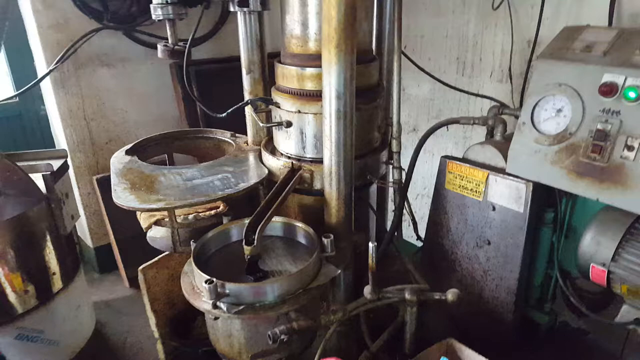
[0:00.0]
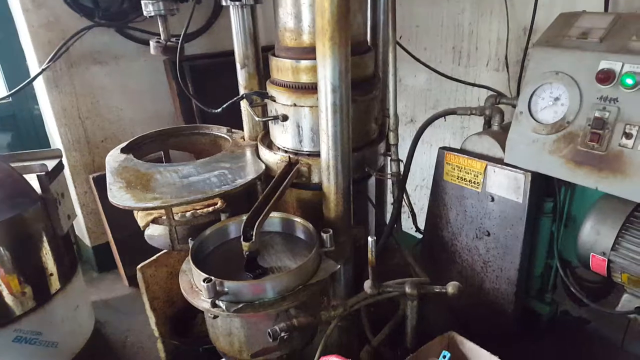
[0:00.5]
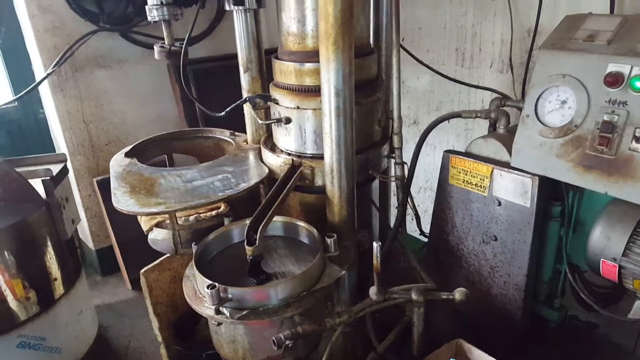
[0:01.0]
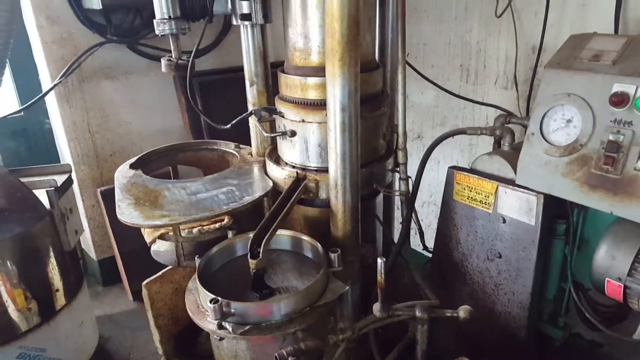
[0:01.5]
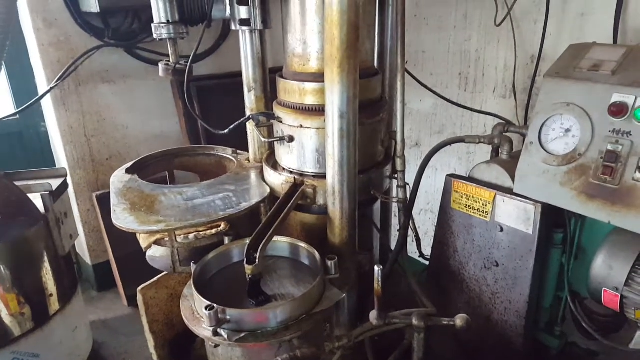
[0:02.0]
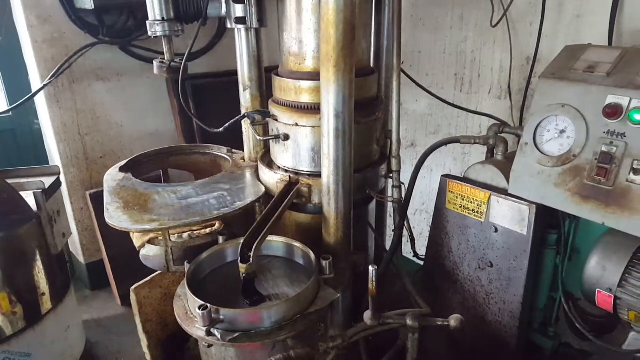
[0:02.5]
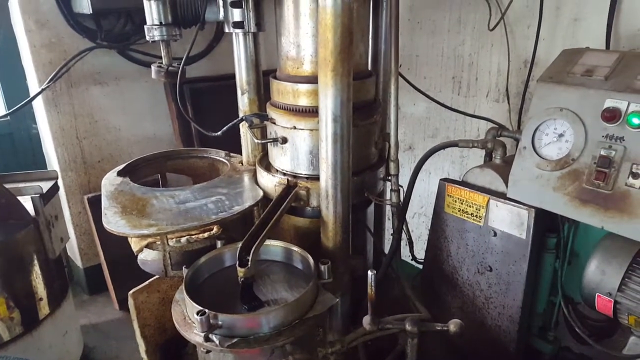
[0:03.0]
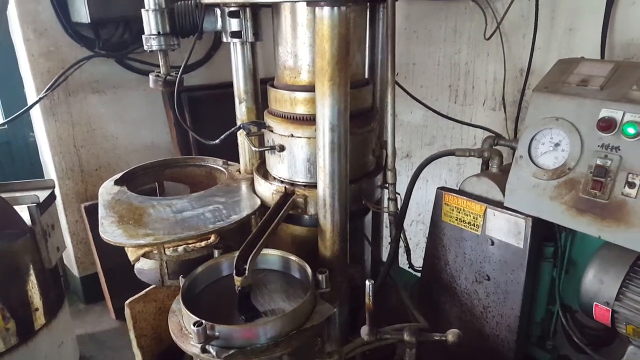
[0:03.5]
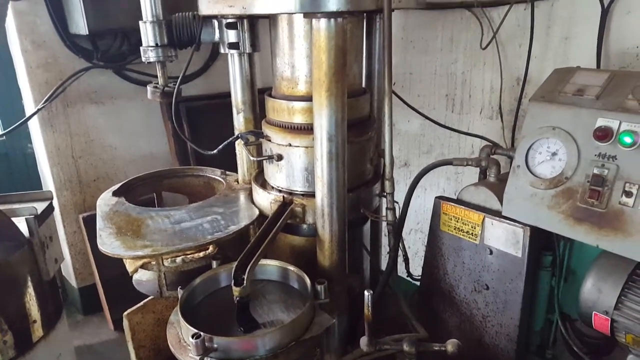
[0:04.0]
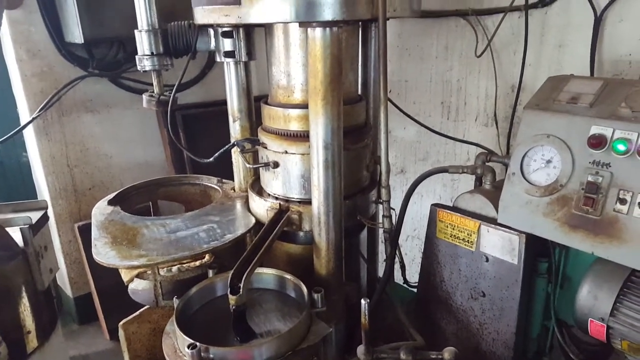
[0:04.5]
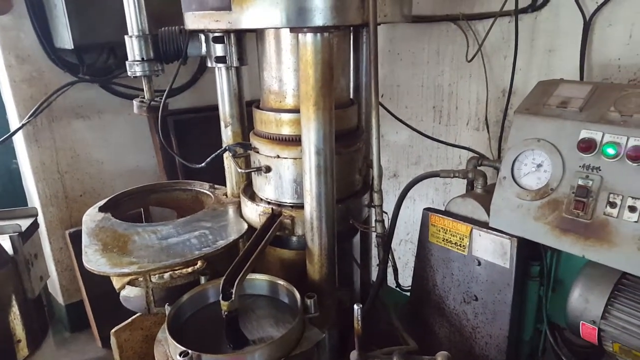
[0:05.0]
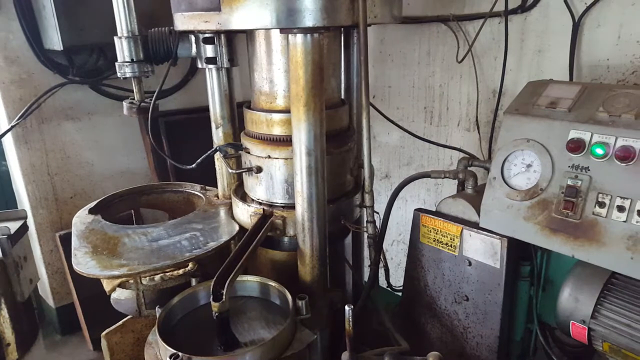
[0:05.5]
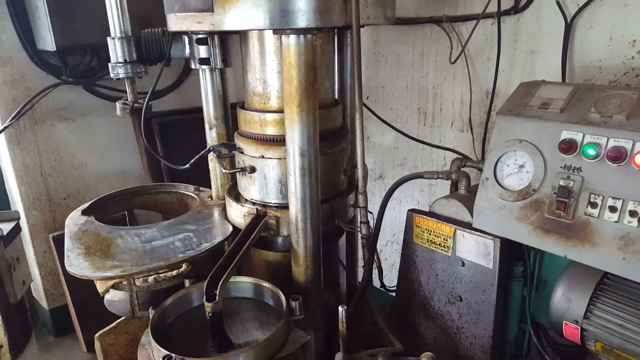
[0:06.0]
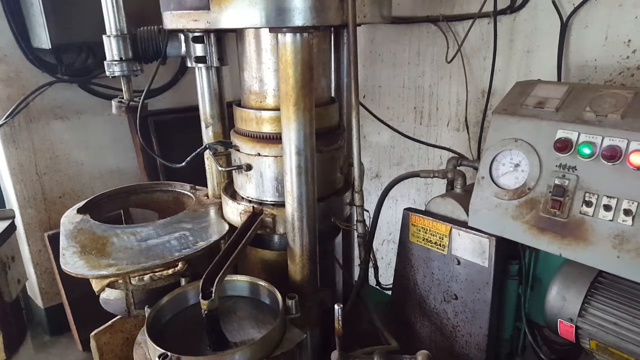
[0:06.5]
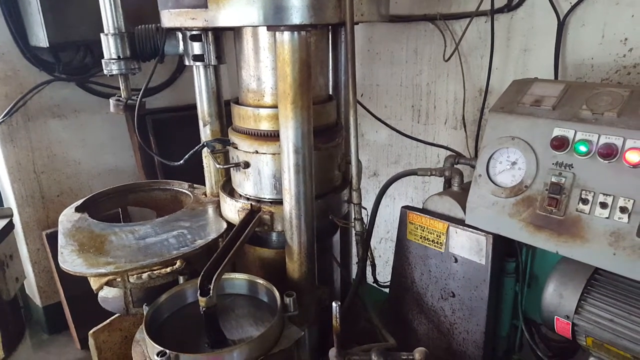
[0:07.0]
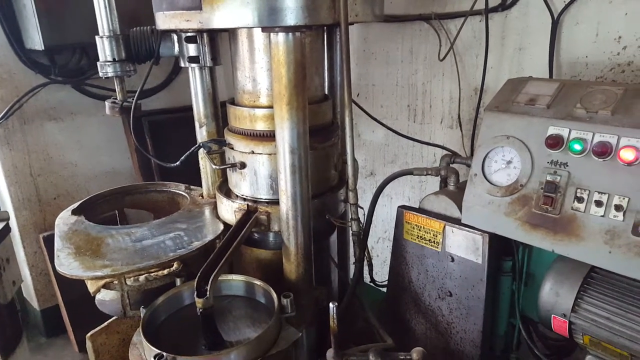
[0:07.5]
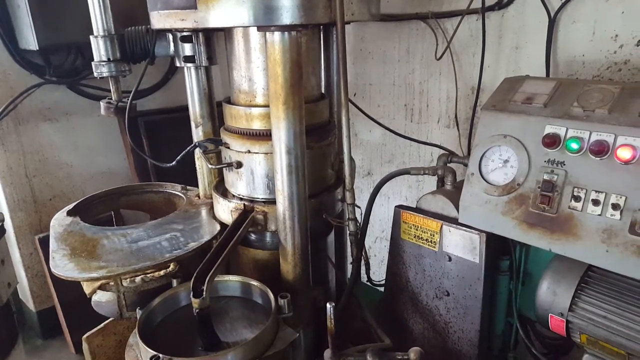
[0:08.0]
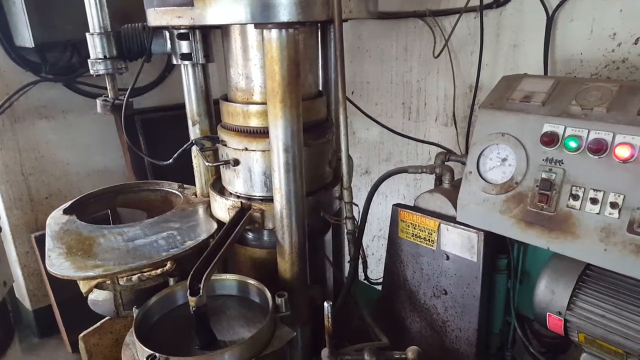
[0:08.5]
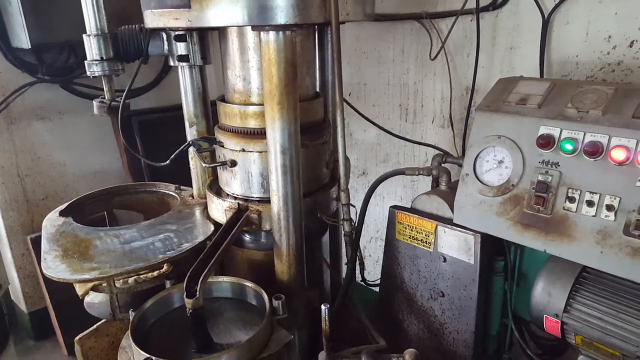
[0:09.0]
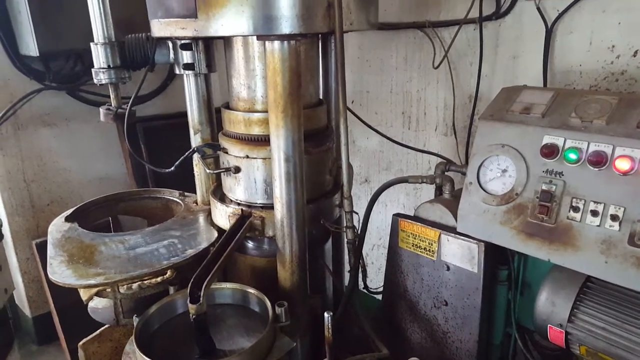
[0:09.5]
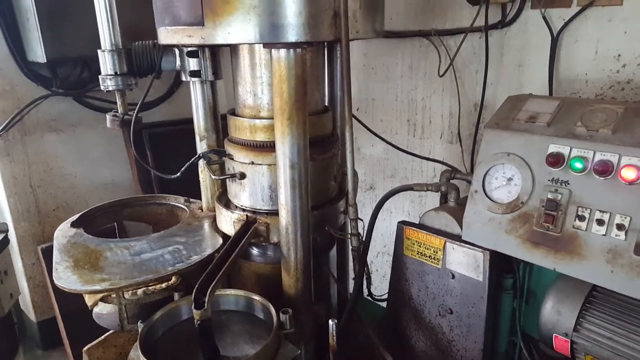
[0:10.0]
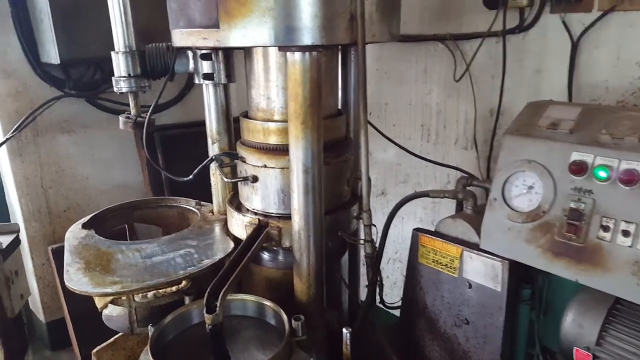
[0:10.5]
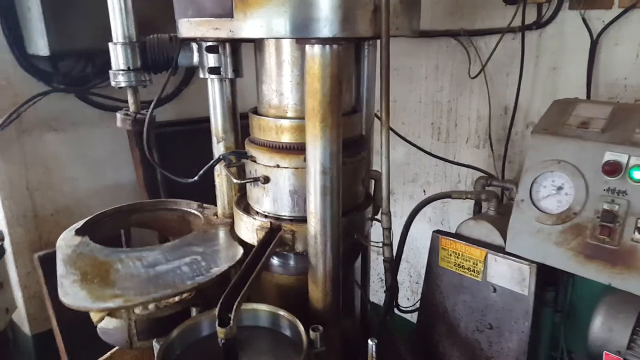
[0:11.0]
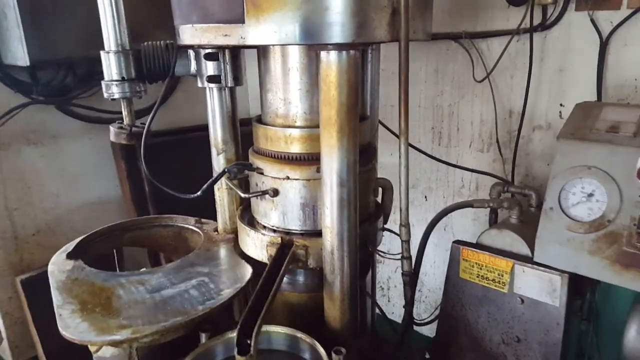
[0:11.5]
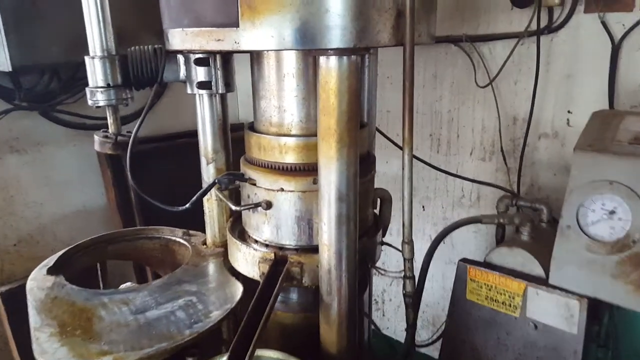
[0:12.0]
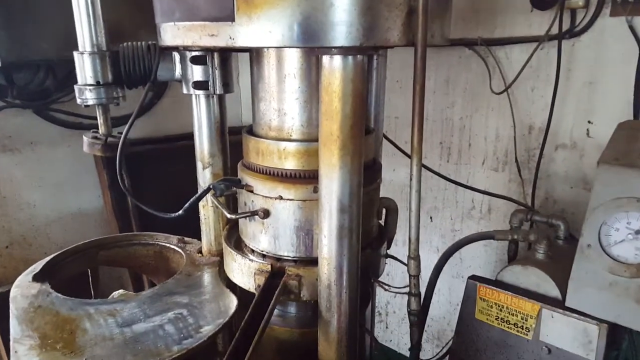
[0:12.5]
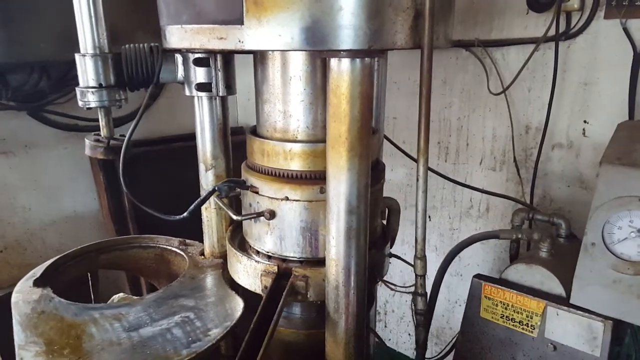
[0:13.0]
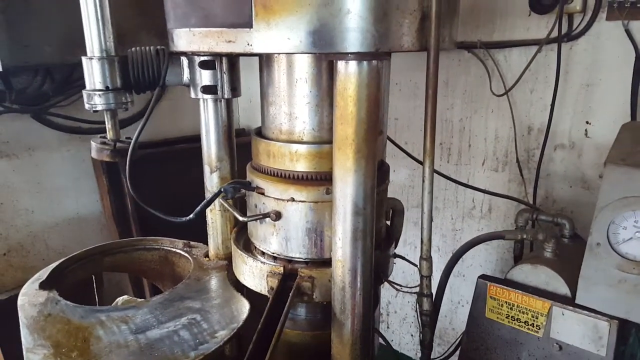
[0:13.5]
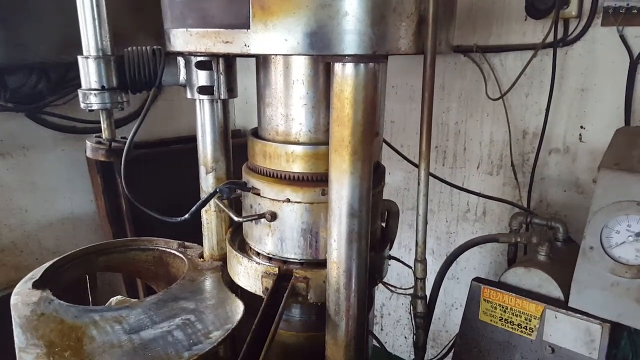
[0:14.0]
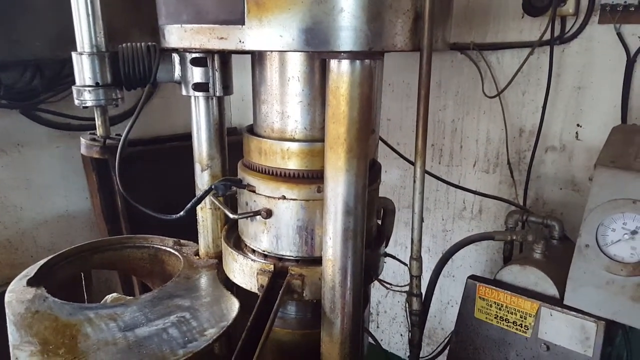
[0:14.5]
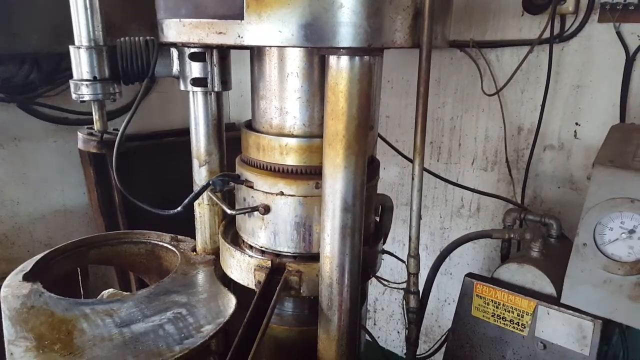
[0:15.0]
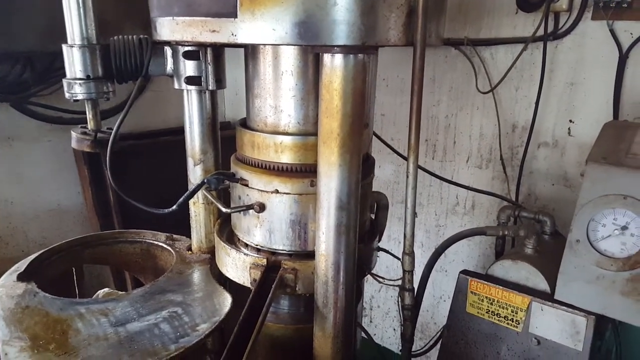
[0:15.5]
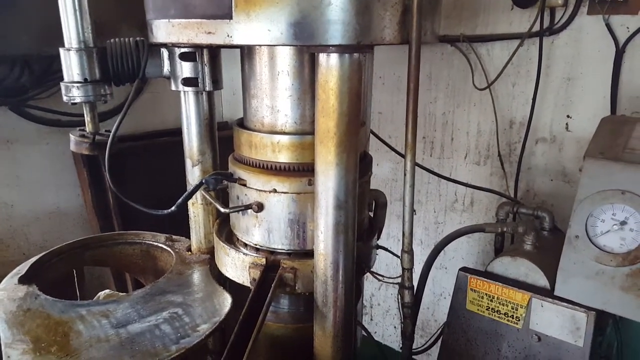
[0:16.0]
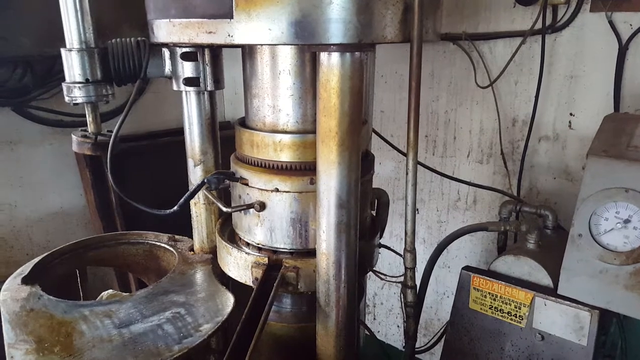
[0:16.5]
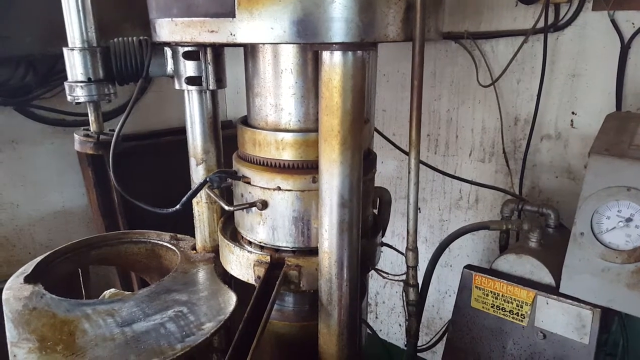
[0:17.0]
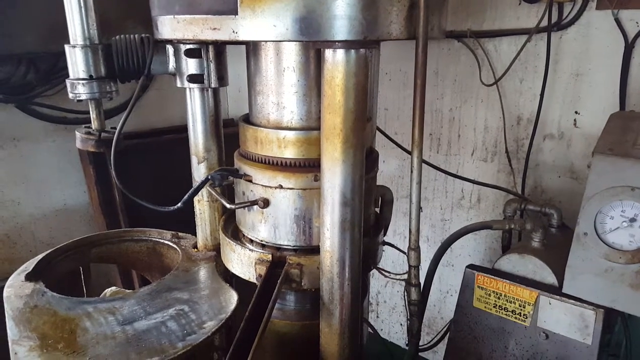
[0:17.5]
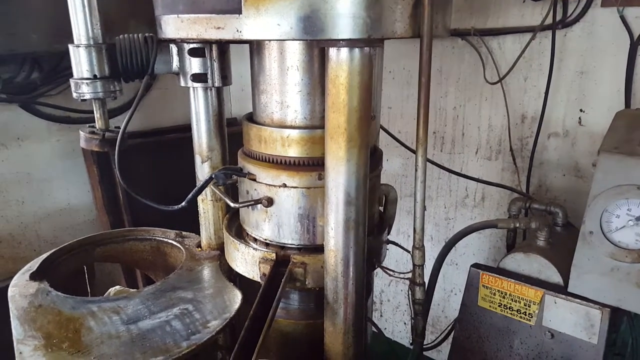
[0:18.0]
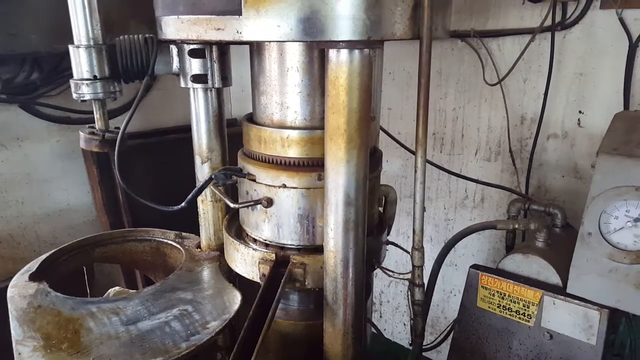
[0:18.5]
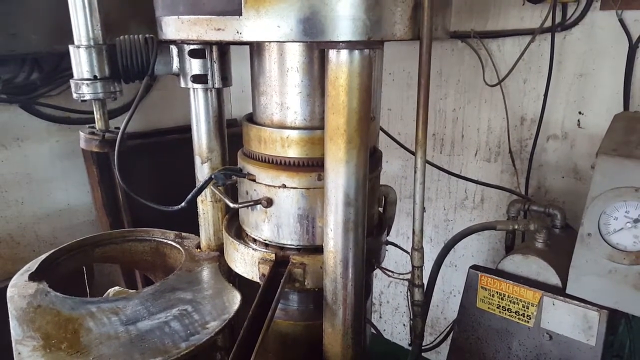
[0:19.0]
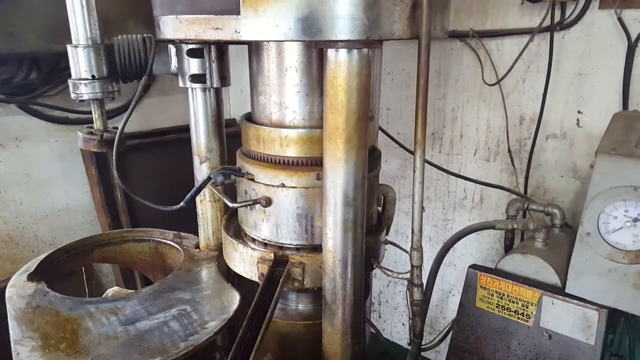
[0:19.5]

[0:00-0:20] Industrial machinery appears, with what appears to be a piston in the center. The machinery appears to be made of metal, likely steel or iron; it is a somewhat gray silver color but heavily weathered, with a lot of what appear to be burn marks or rust and a lot of yellowing. The piston in the center appears to be very slowly rising as the camera slowly zooms in on it. Off to the right side there is a panel with a dial and multiple lights, and on the right side there is some sort of receptacle with a similar steel frame. The camera pans over to the left and begins zooming in more quickly on the piston. A set of black wires is connected to the front of the piston, going off to the left and then snaking over above. The shot lingers on the piston.